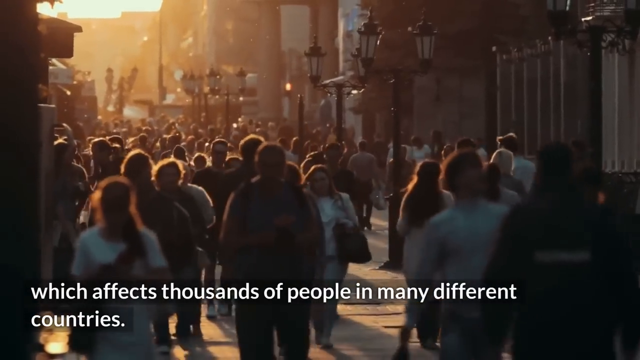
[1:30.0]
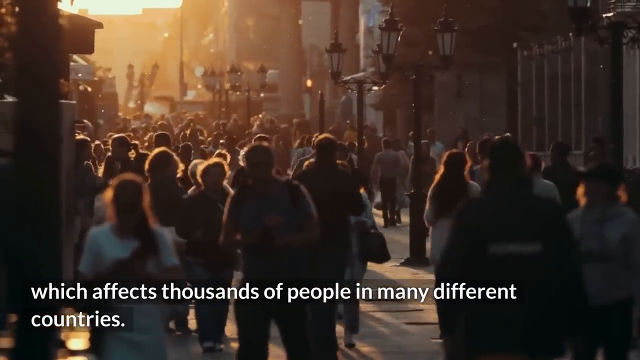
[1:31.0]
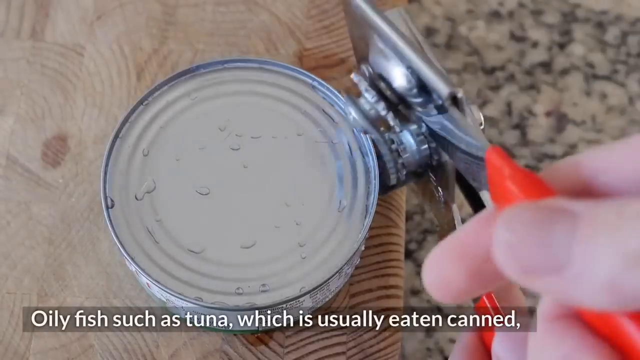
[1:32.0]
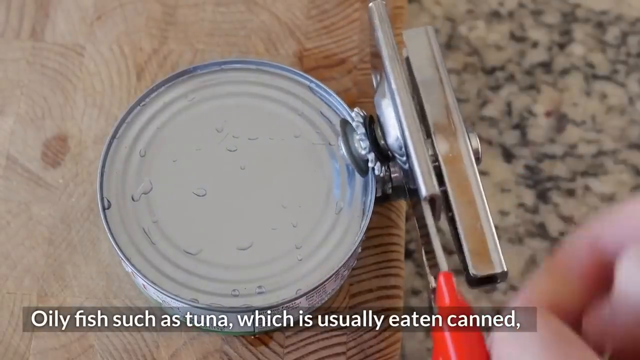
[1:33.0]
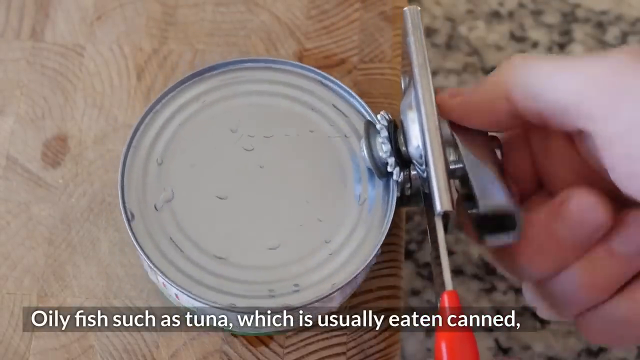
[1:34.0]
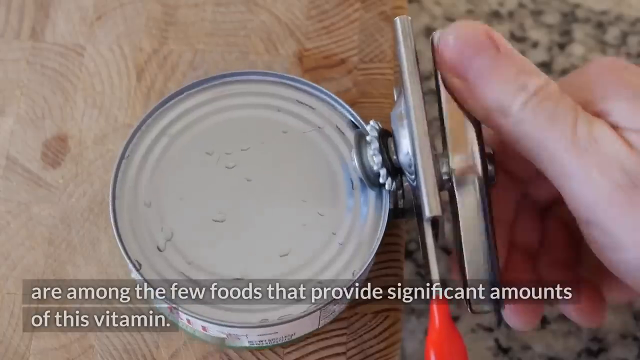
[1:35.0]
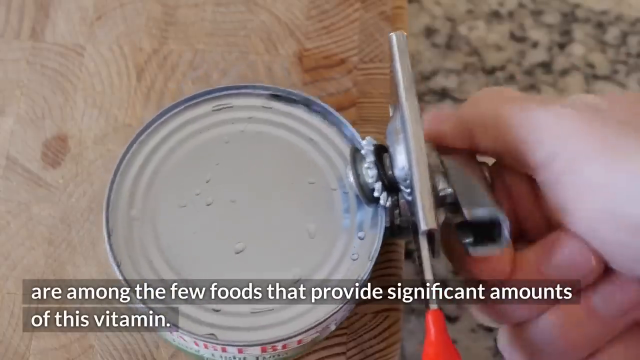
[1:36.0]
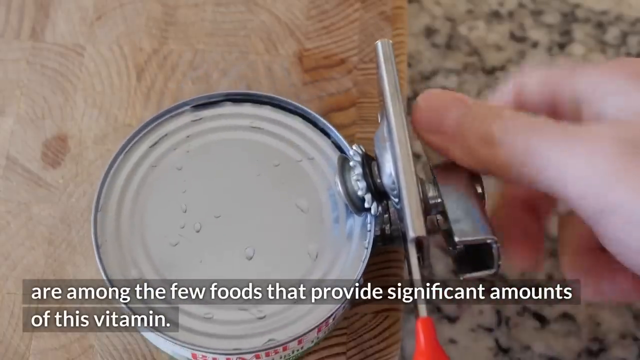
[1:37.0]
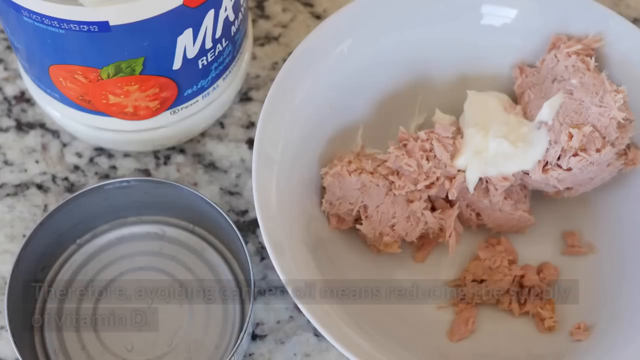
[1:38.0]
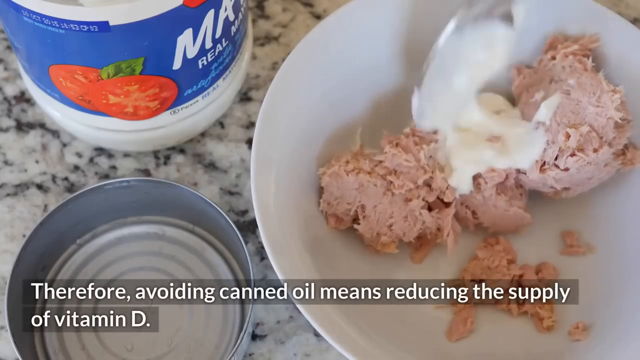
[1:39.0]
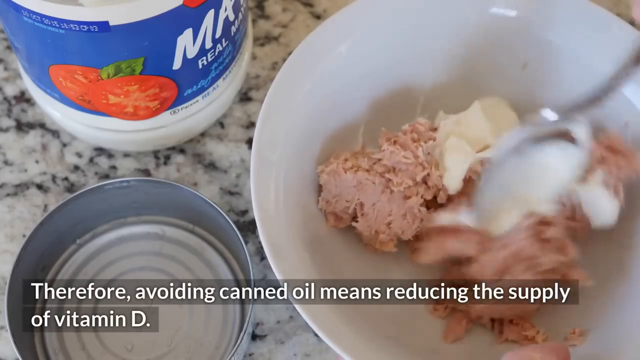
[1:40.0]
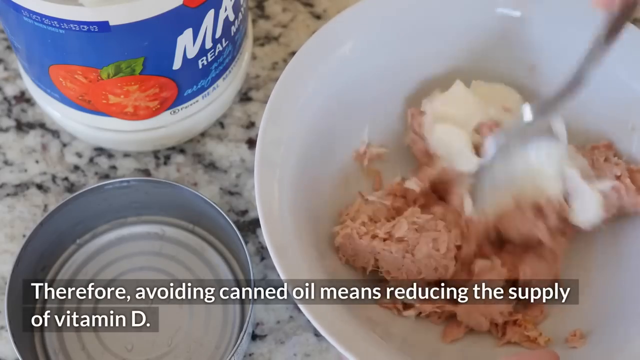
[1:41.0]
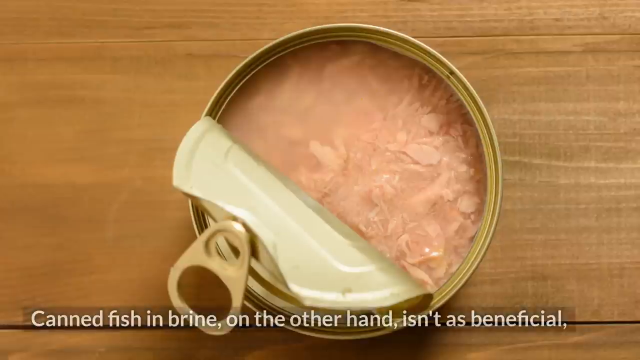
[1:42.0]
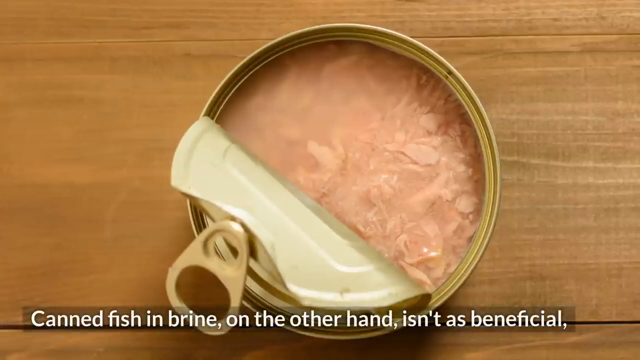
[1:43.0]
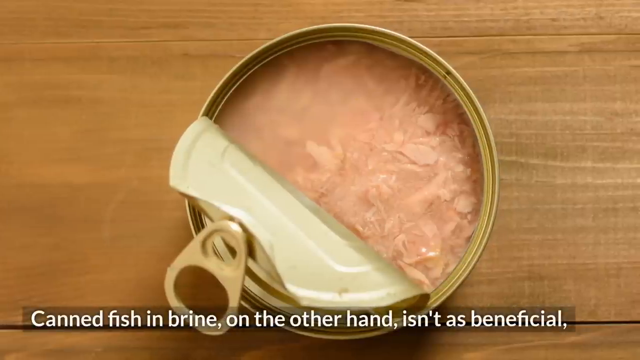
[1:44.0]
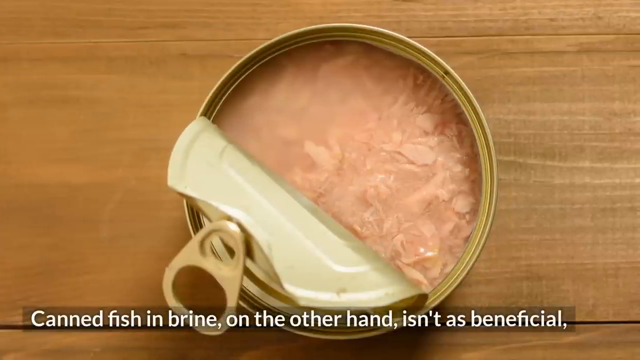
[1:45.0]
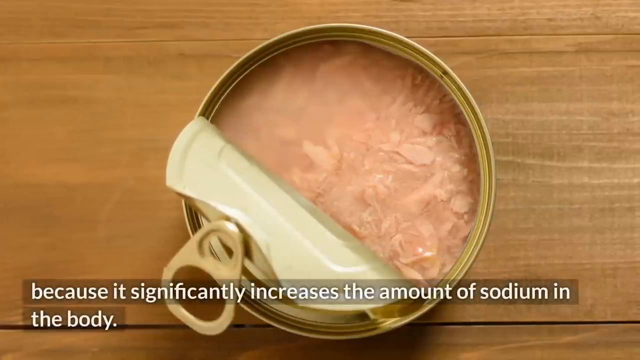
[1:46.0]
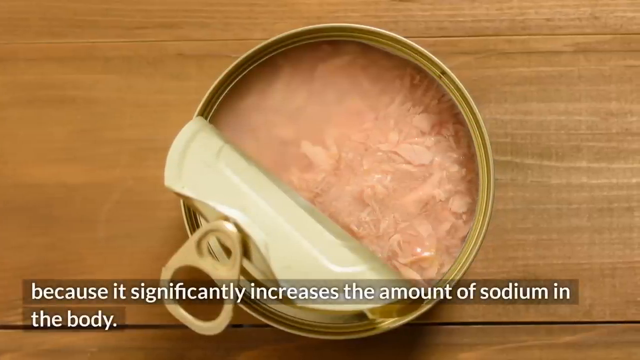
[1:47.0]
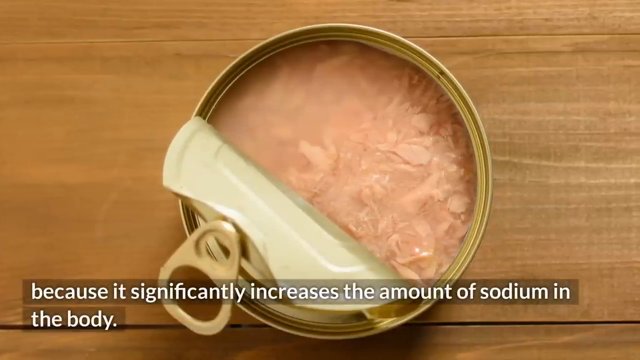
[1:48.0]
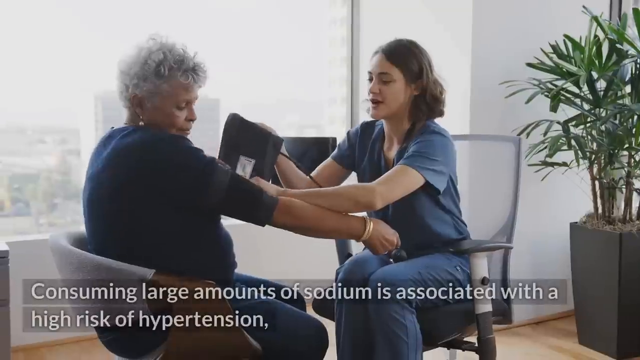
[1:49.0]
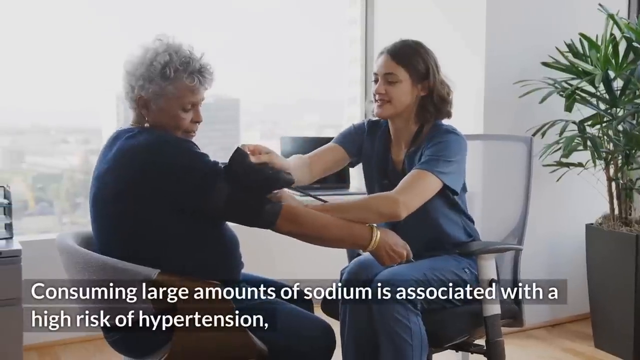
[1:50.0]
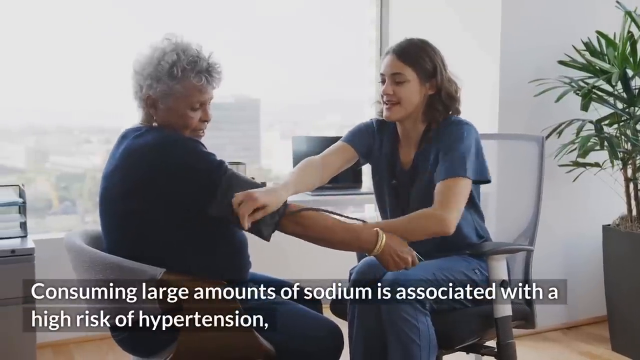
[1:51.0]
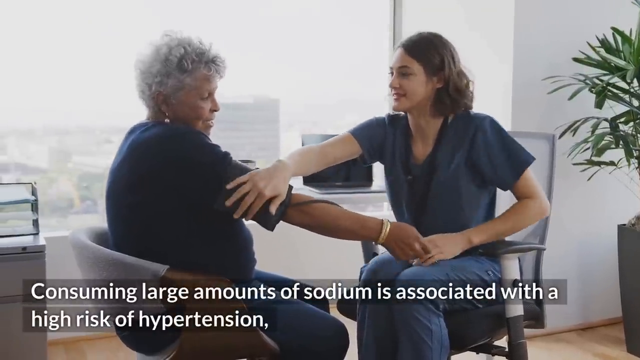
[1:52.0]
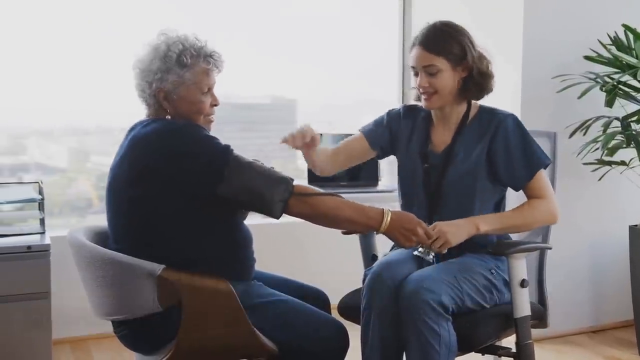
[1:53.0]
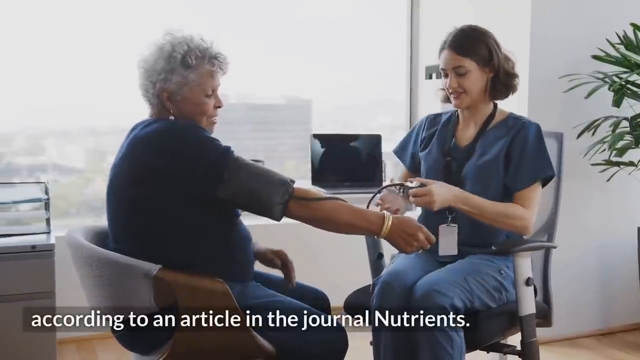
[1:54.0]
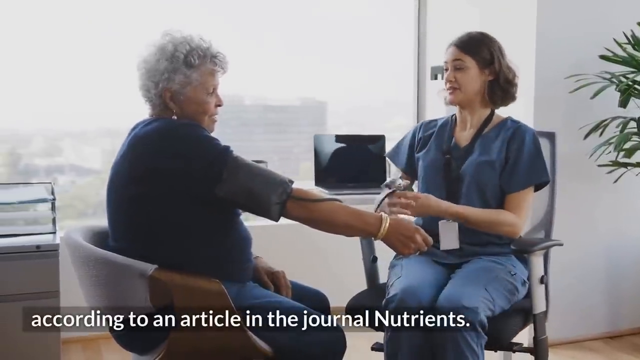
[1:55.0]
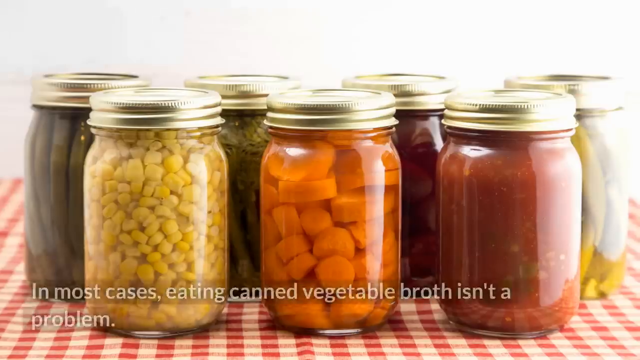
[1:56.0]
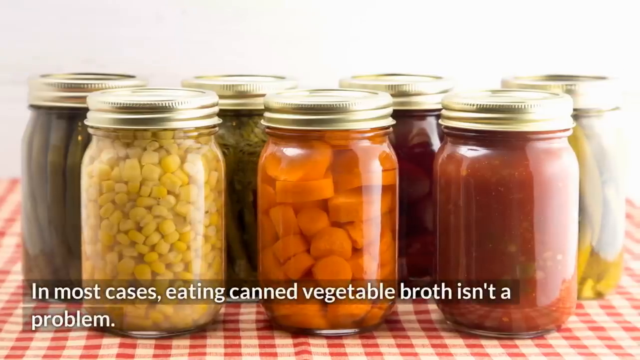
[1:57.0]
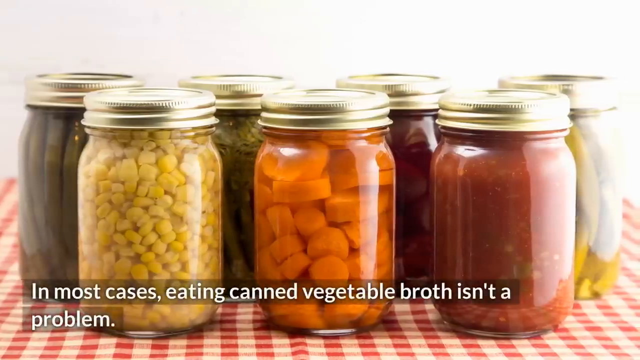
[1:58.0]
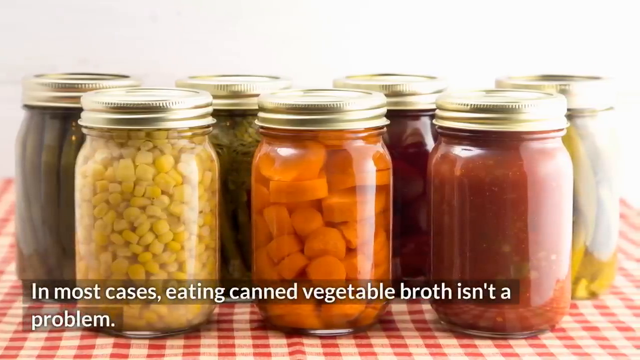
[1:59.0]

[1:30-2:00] A can of tuna is on a brown table, and a person's hand comes in with a can opener to open it. The caption reads "only fish such as tuna, which is usually eaten canned, are among the few foods that provide significant amounts of this vitamin." Next, a person makes a tuna dish: a jar of mayonnaise is in the top left corner, an empty can of tuna in the bottom left corner, and a white bowl on the right with the tuna and mayonnaise inside it, which the person mixes. An open can of tuna follows, with the caption "canned fish and brine on the other hand isn't as beneficial because it significantly increases the amount of sodium in the body." The video then shows a woman who is a nurse or doctor putting a cuff on a patient.